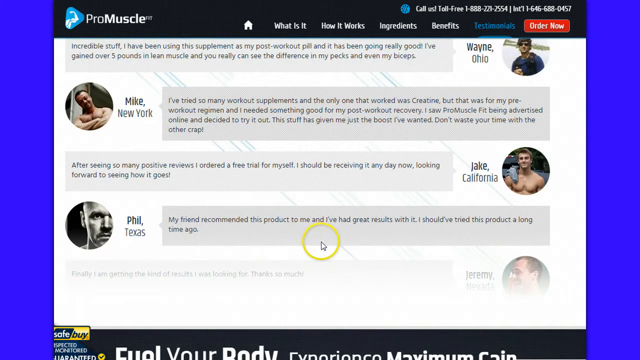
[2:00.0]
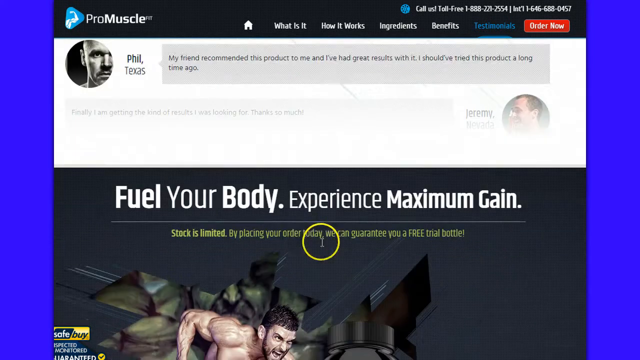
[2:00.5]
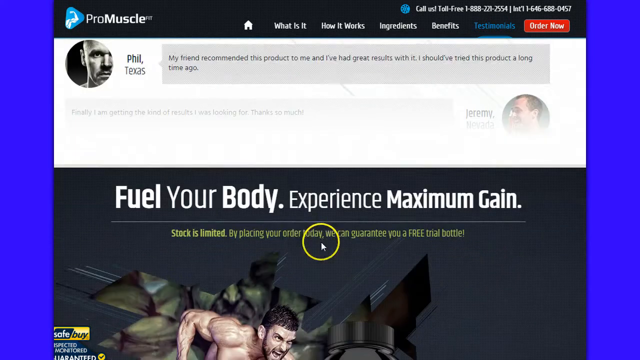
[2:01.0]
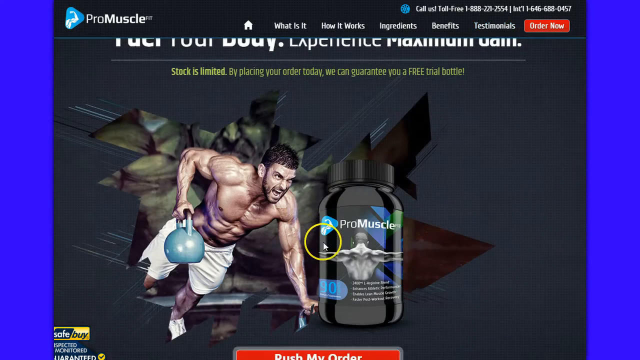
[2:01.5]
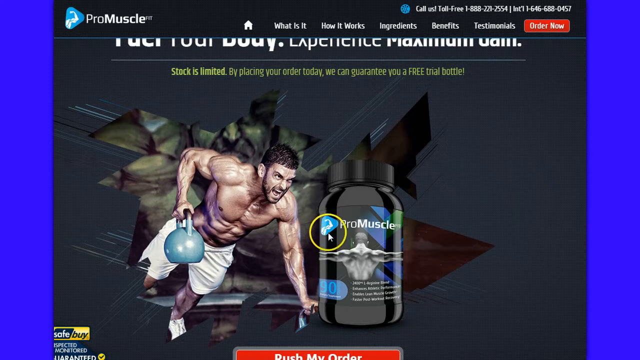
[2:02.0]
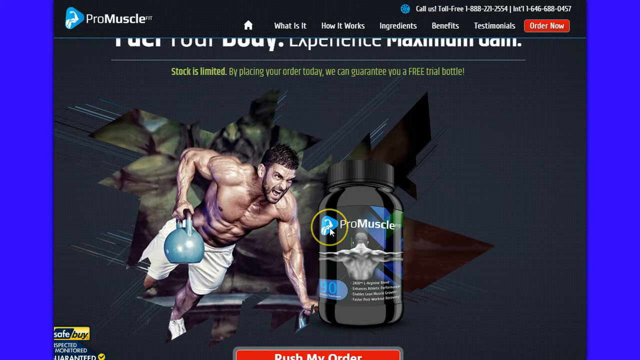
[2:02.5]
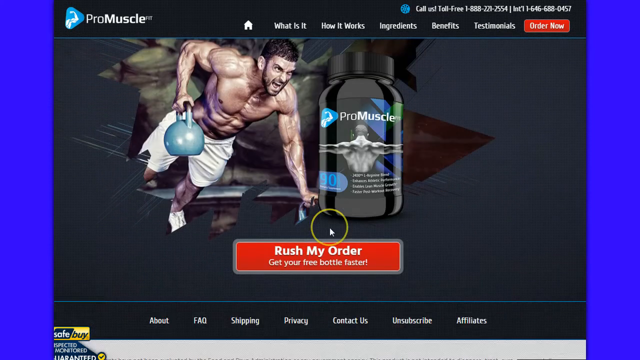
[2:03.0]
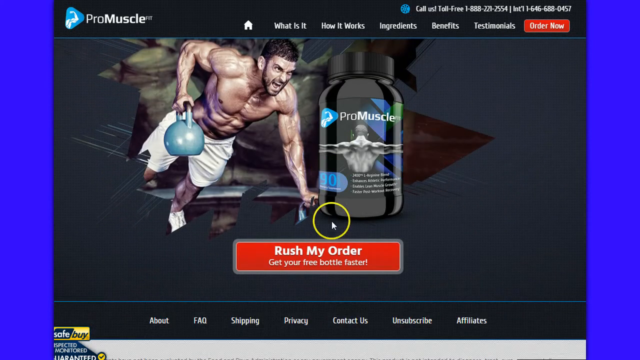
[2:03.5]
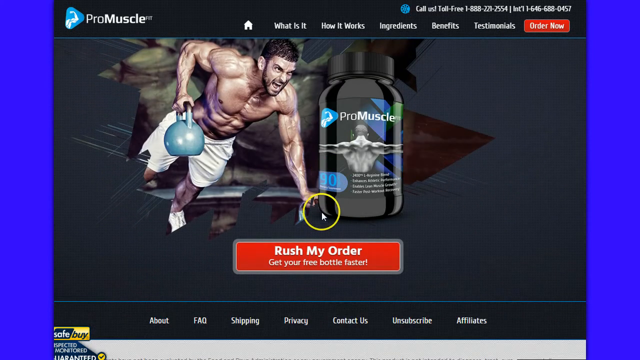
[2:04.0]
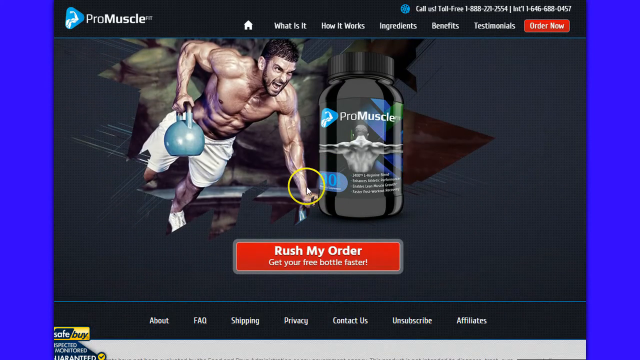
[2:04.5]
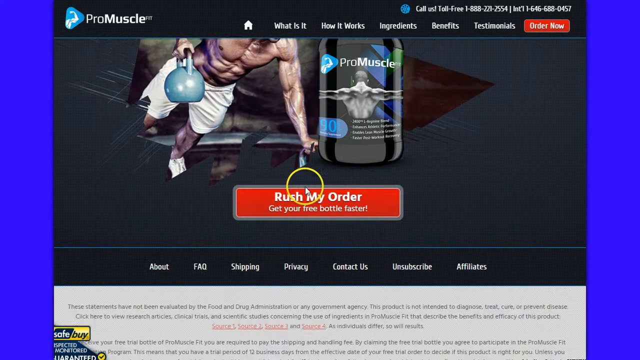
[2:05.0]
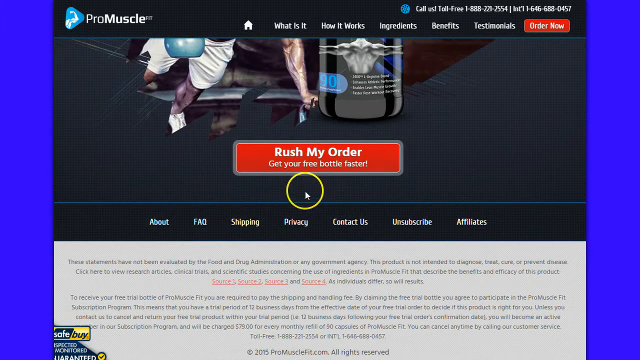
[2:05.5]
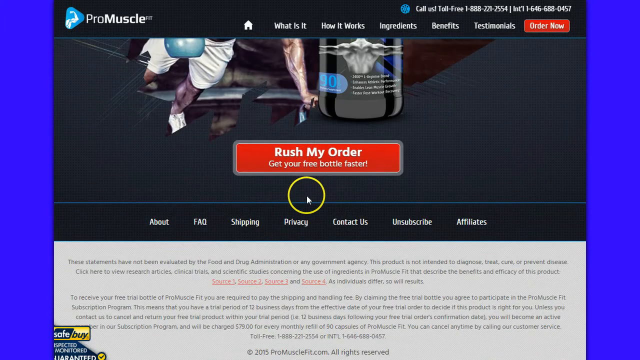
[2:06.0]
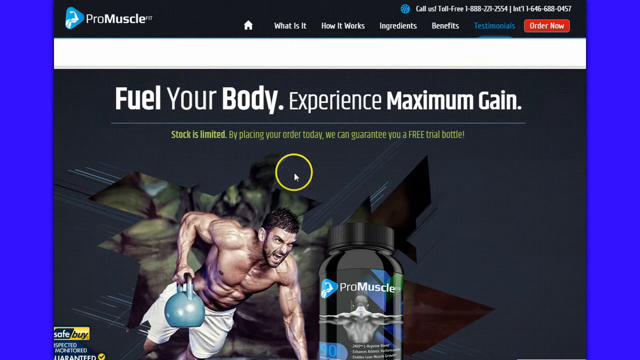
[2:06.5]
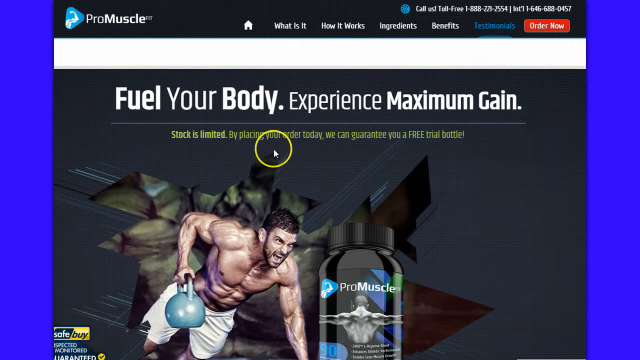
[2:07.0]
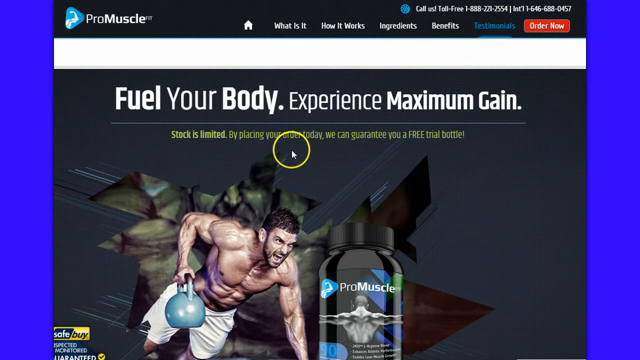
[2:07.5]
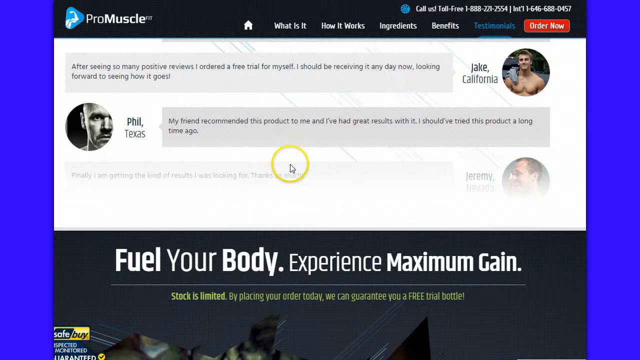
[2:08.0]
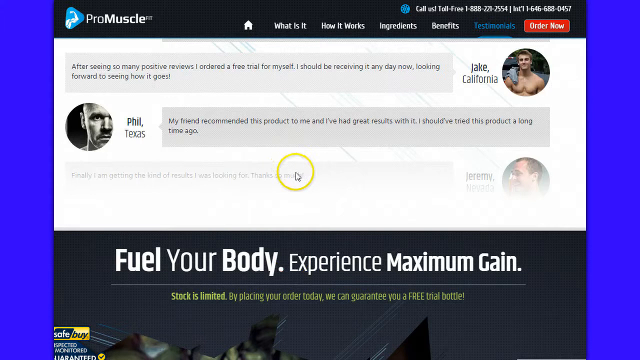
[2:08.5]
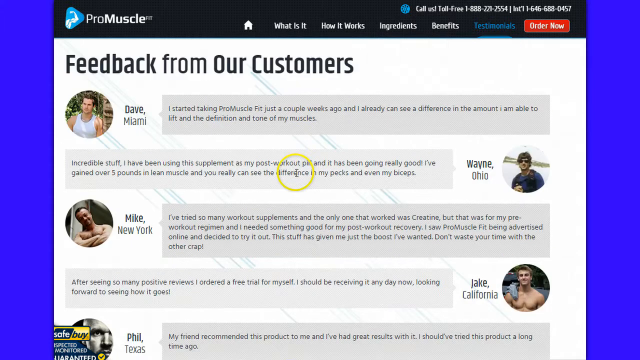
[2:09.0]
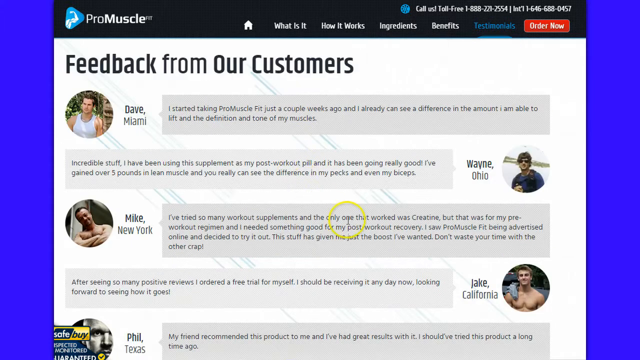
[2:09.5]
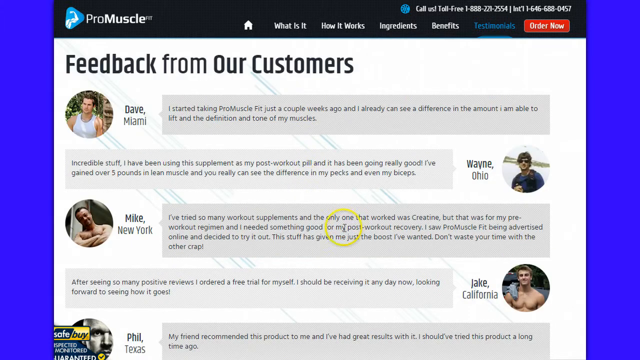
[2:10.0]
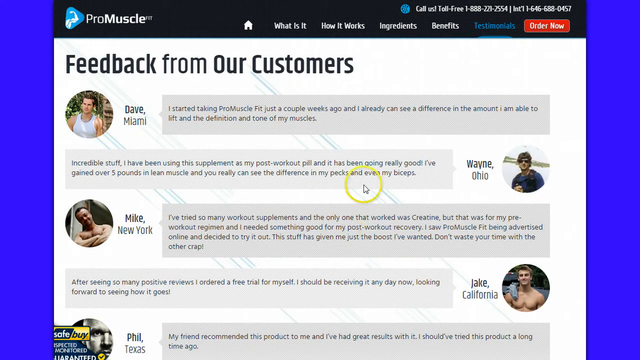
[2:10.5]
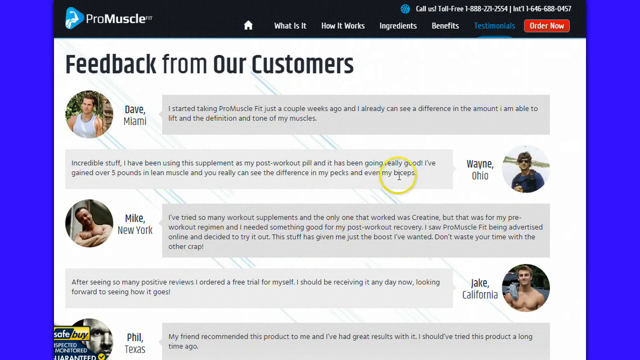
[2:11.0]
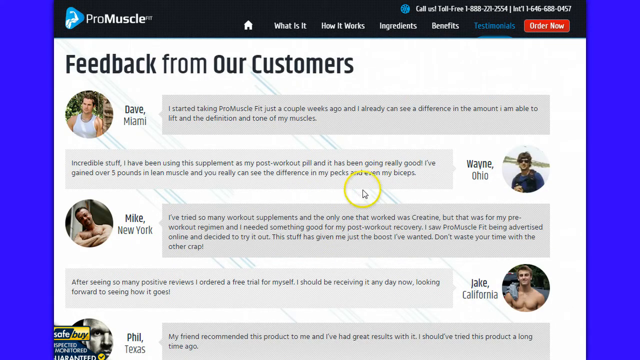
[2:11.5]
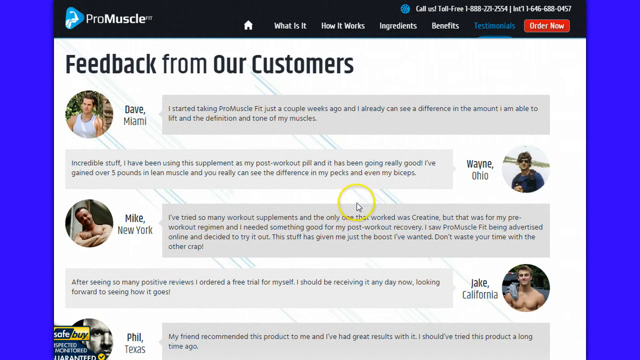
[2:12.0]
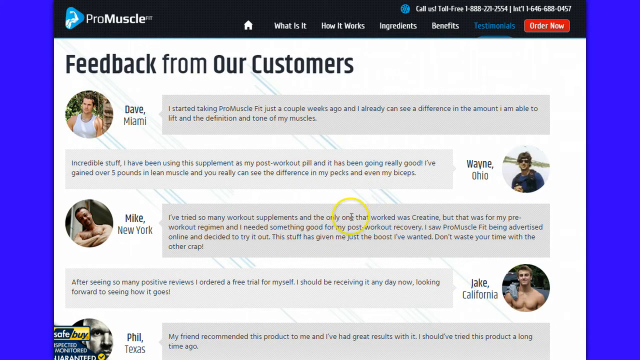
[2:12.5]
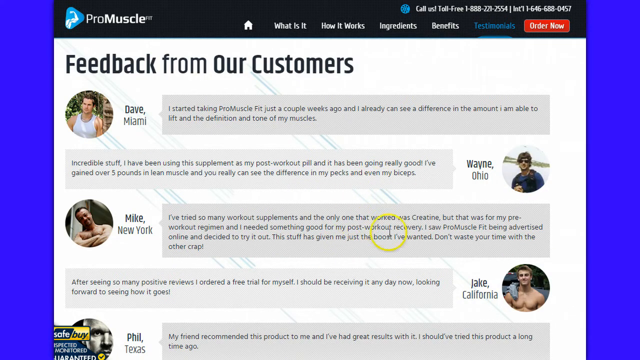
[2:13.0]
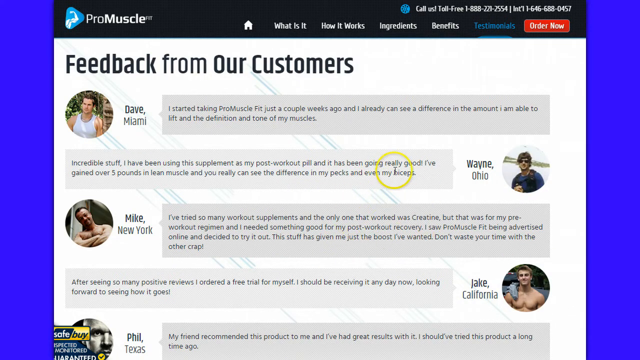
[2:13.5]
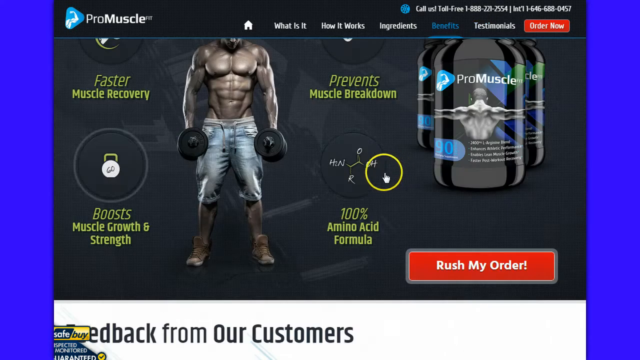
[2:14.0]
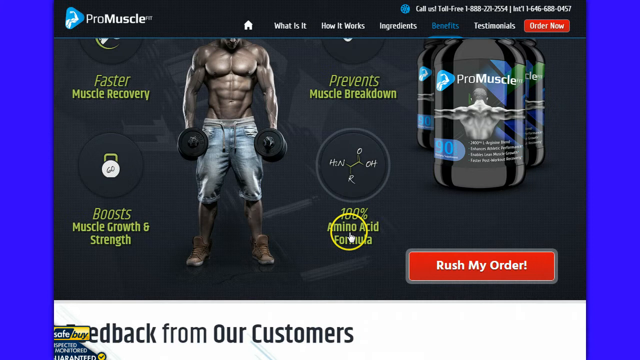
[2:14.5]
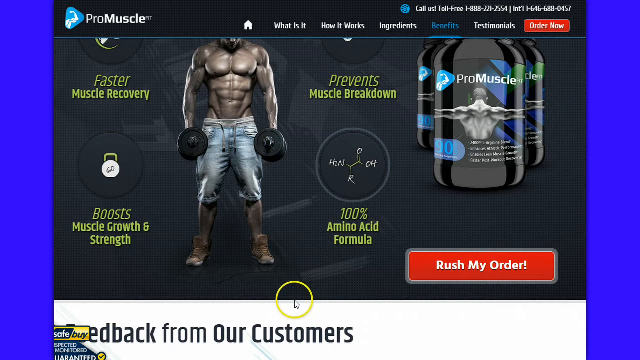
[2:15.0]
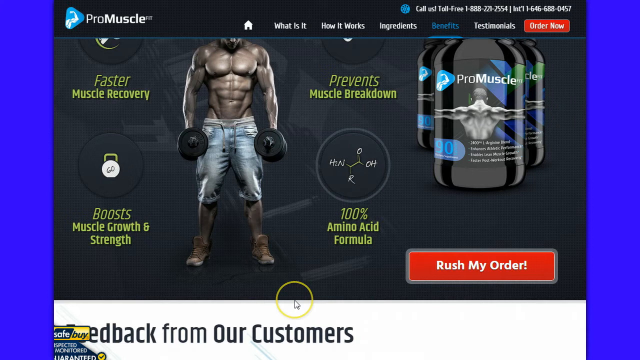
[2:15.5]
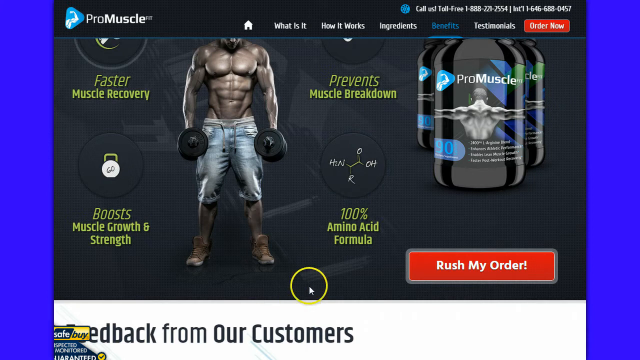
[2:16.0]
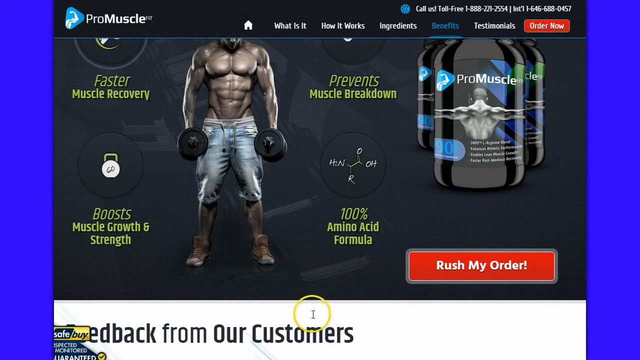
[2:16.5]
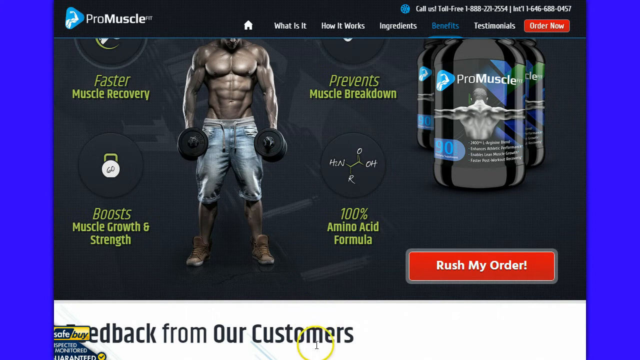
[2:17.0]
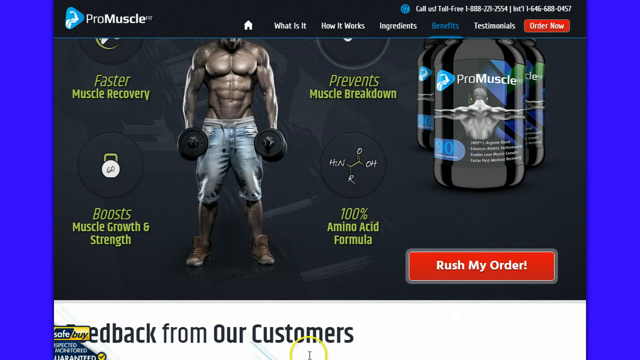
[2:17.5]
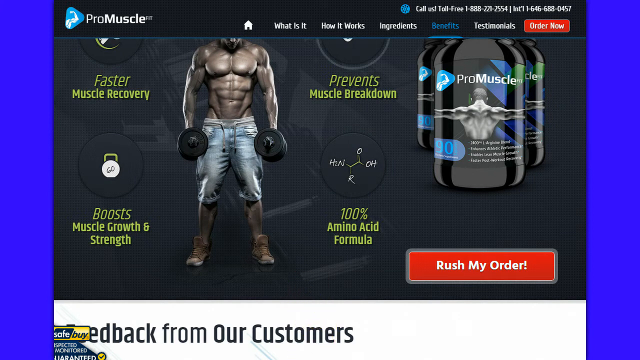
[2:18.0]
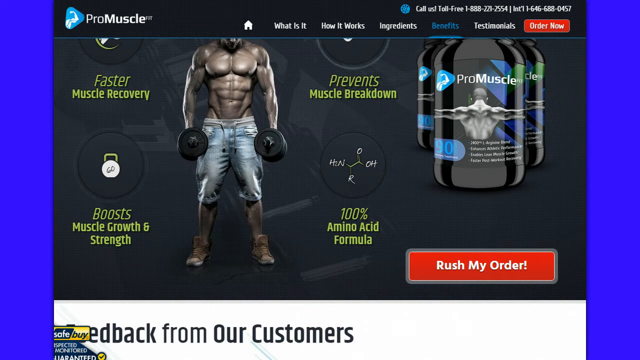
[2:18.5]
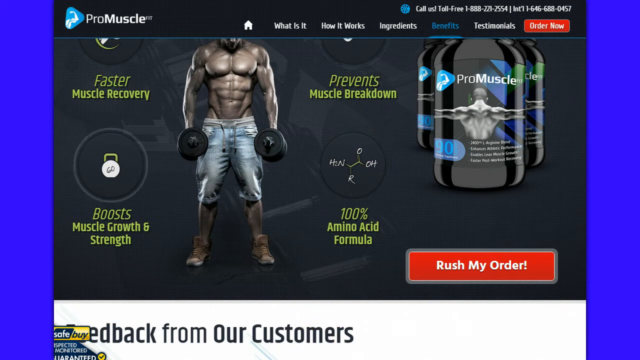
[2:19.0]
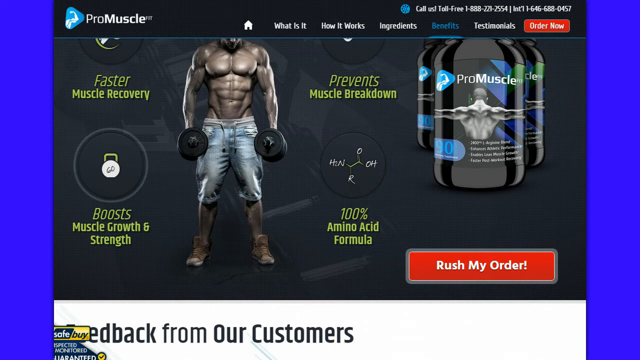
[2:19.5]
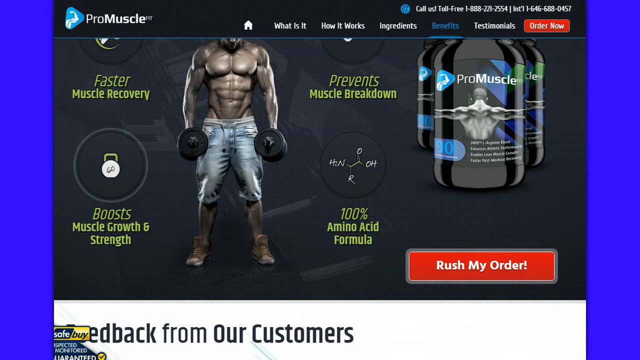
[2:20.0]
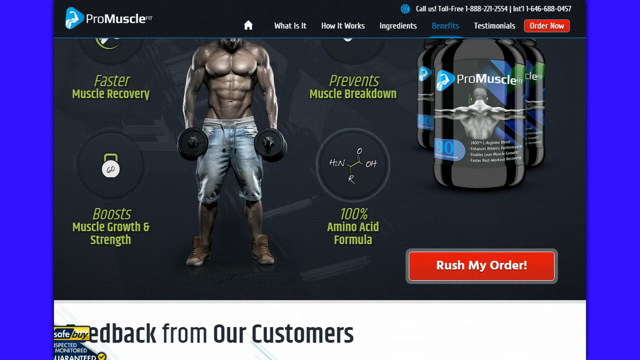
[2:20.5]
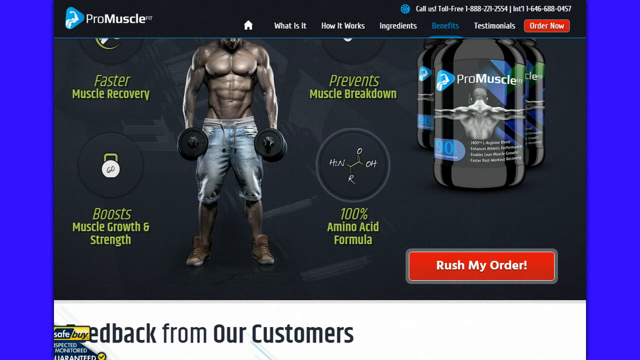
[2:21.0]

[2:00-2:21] Customer reviews for a product called ProMuscle are shown, each with a person's picture beside it. At the top is Mike from New York, whose review says: "I've tried so many workout supplements, and the only one that worked was creatine, but that was for my pre-workout regimen, and I needed something good for my post-workout recovery. I saw ProMuscleFit being advertised online and decided to try it out. This stuff has given me just the boost I've wanted. Don't waste your time with the other crap." There are also reviews from Jake from California, Phil from Texas, and Jeremy toward the bottom, and Wayne from Ohio up toward the top. The yellow circle cursor is used to scroll down through different areas of the ad, then back up to Mike's review from New York. The view then goes back to a page with something like a drawn picture of a bodybuilder wearing jeans, with more information about the product in those areas.